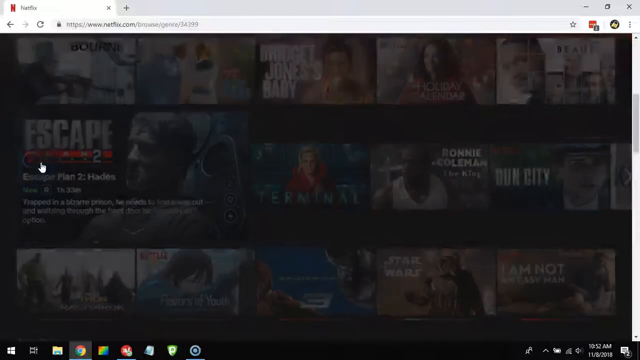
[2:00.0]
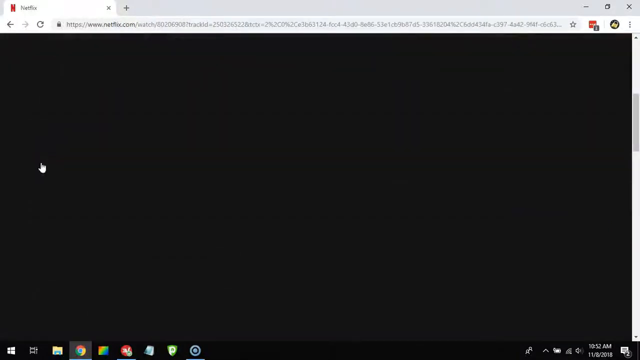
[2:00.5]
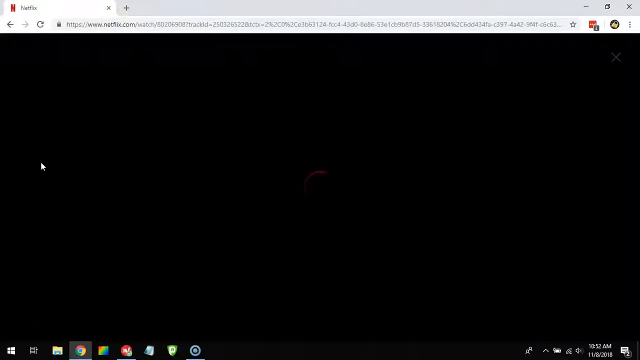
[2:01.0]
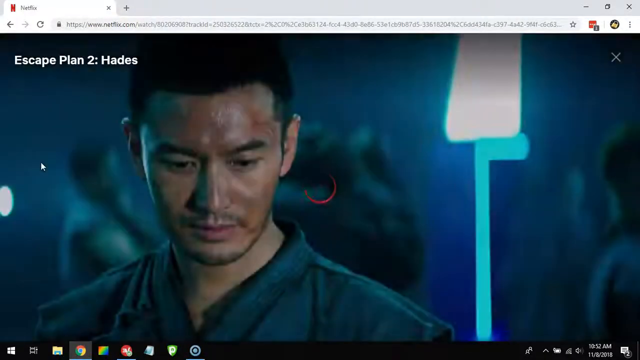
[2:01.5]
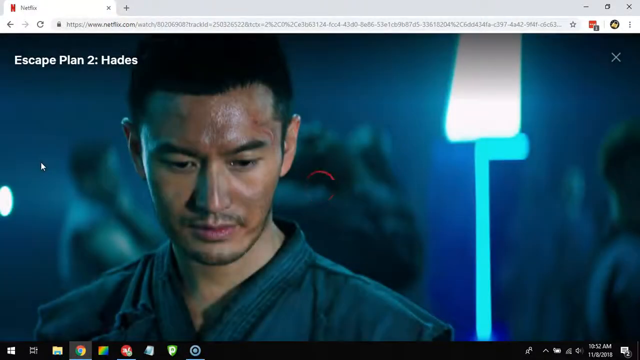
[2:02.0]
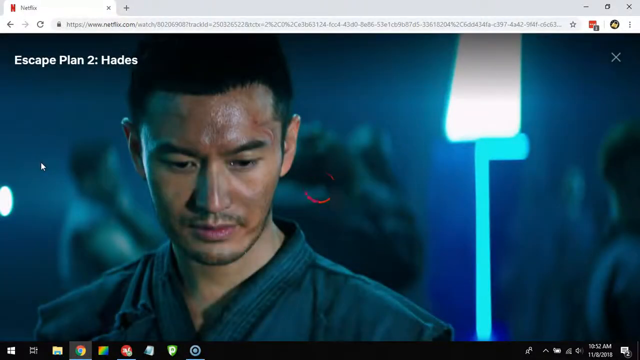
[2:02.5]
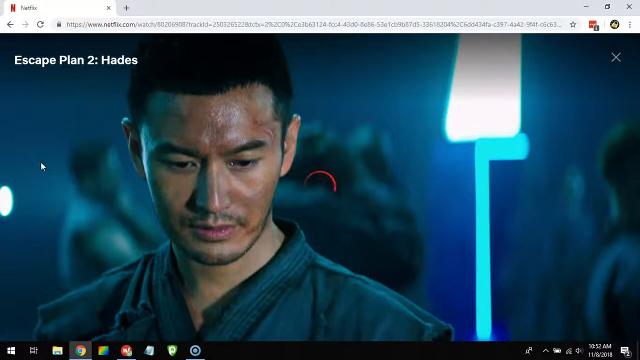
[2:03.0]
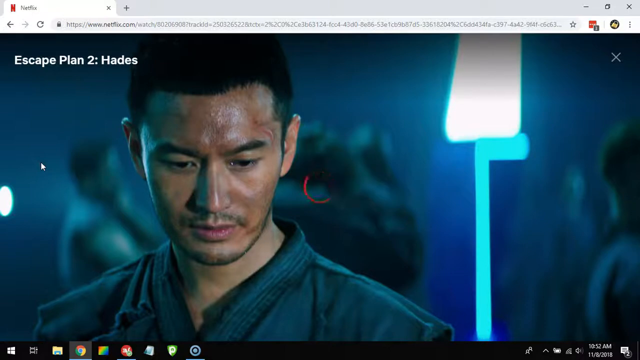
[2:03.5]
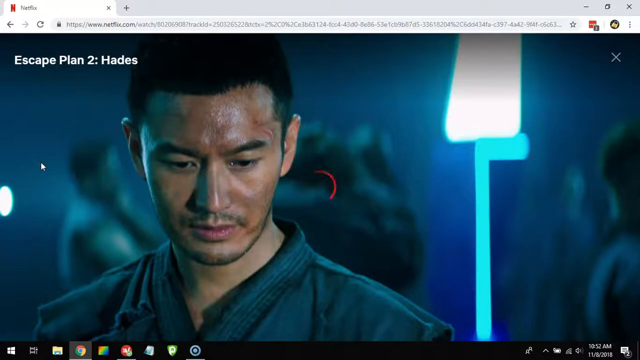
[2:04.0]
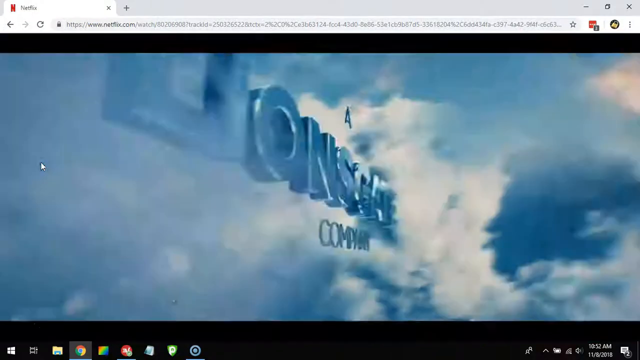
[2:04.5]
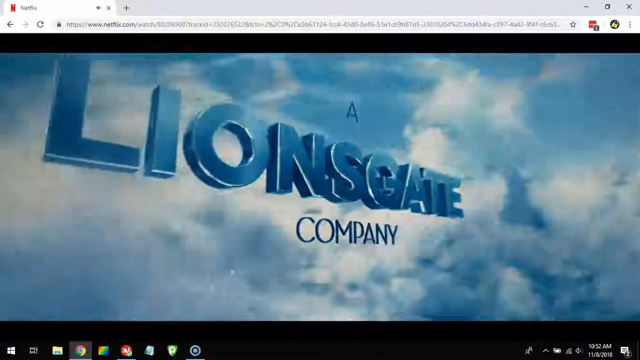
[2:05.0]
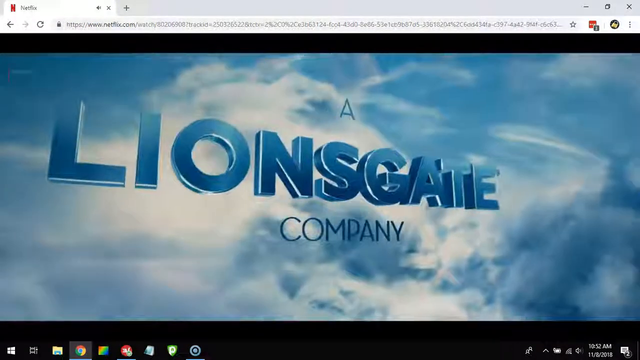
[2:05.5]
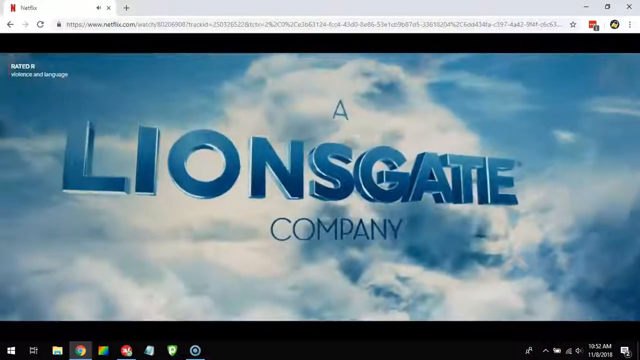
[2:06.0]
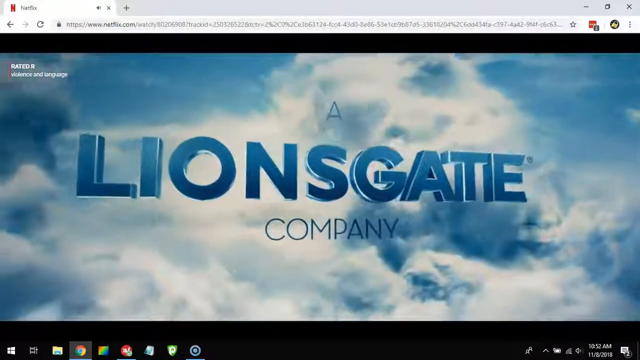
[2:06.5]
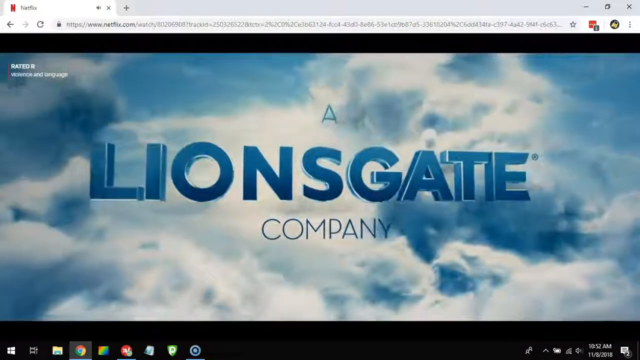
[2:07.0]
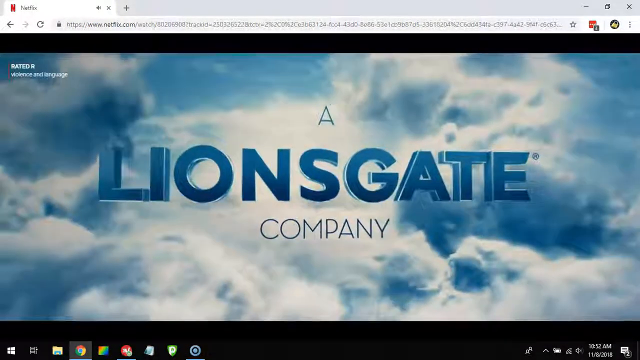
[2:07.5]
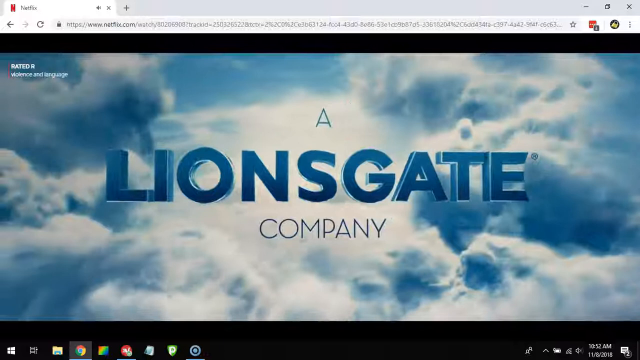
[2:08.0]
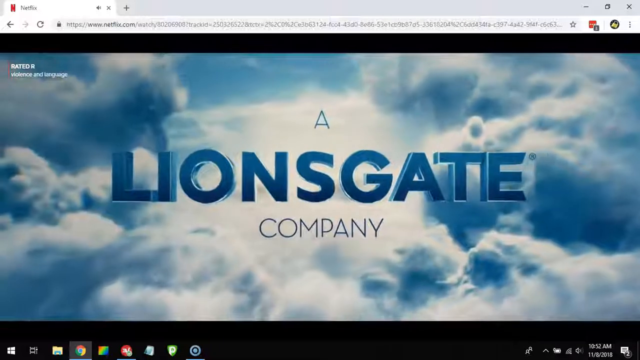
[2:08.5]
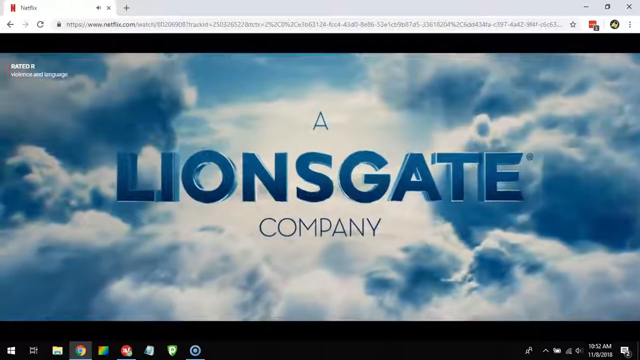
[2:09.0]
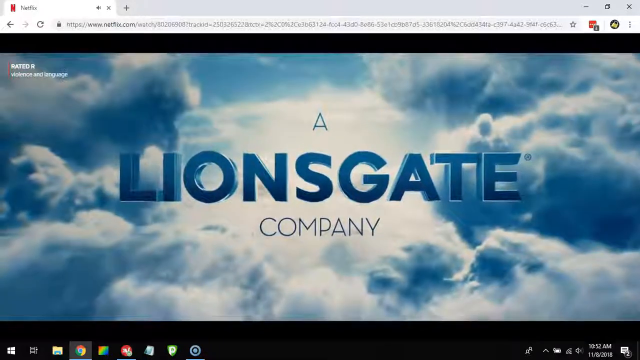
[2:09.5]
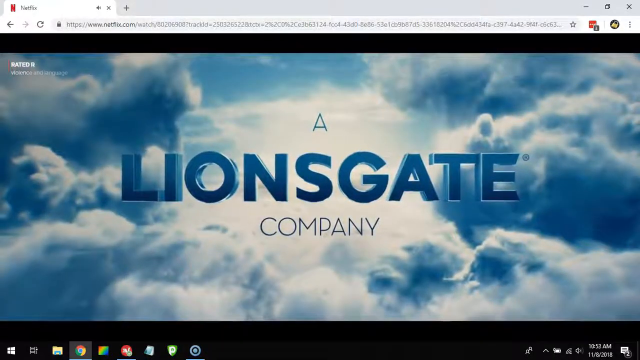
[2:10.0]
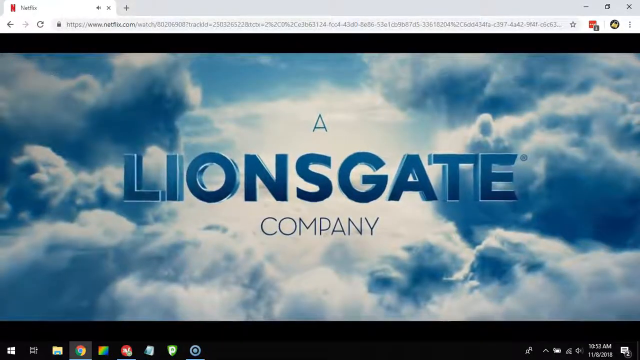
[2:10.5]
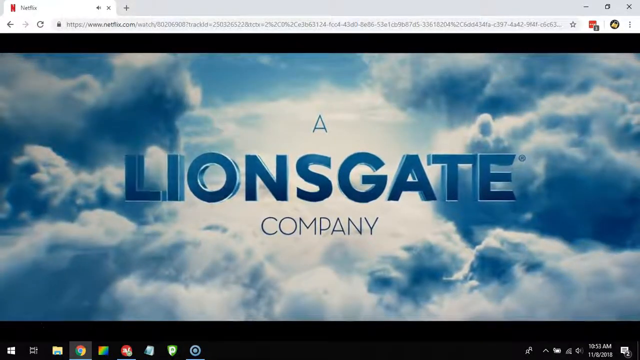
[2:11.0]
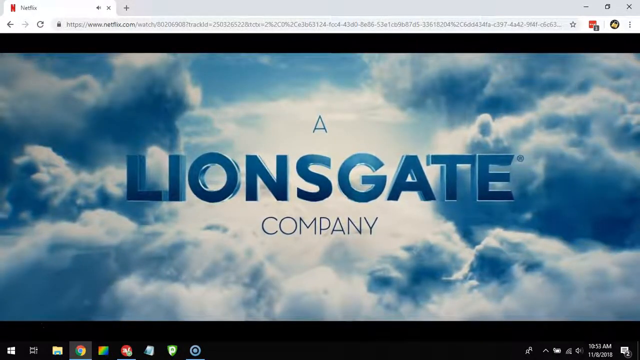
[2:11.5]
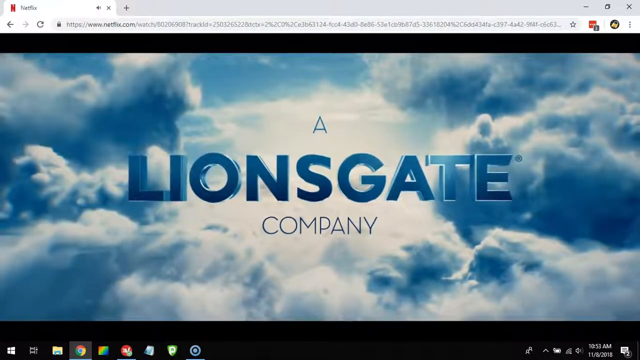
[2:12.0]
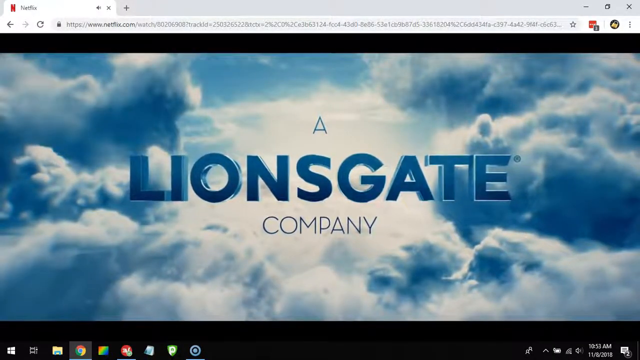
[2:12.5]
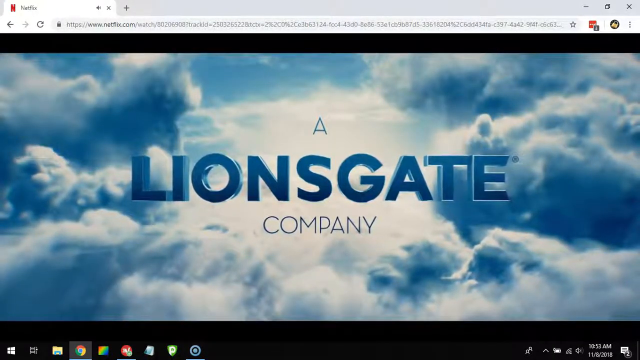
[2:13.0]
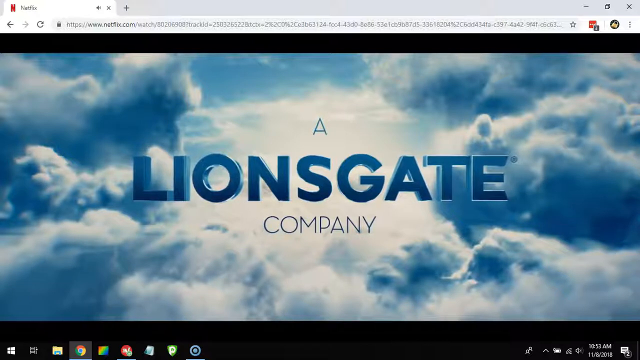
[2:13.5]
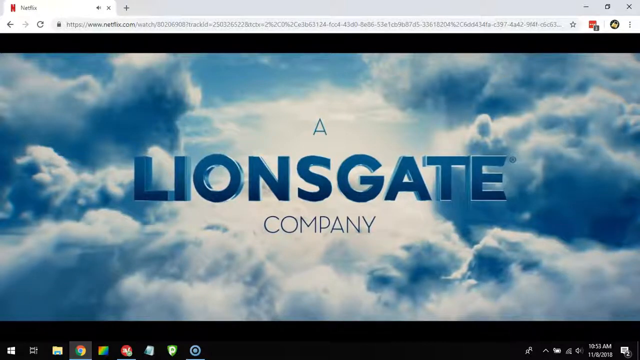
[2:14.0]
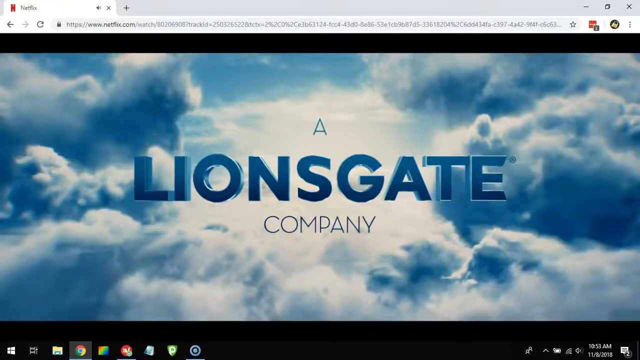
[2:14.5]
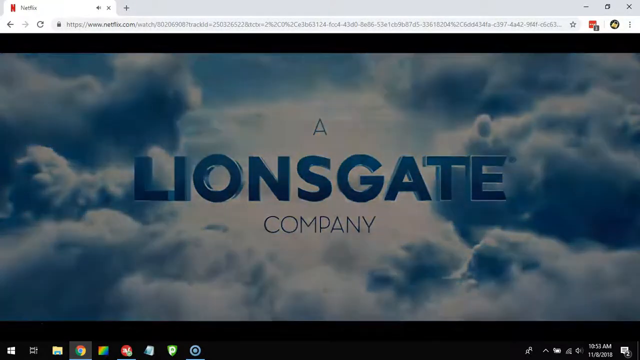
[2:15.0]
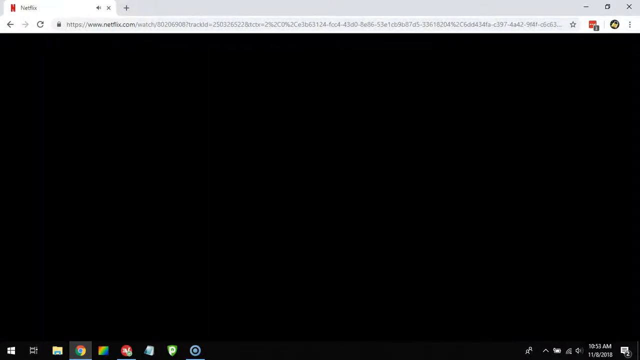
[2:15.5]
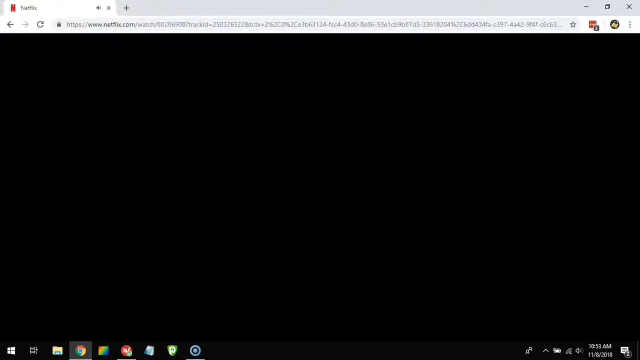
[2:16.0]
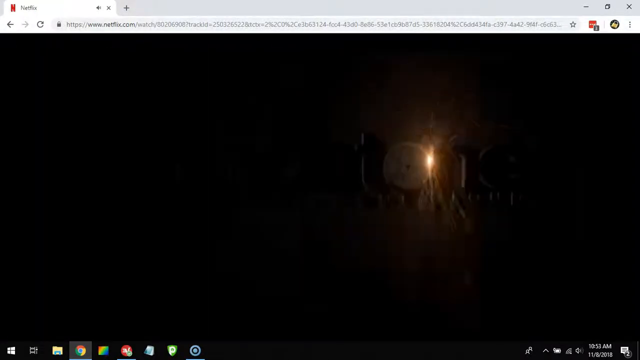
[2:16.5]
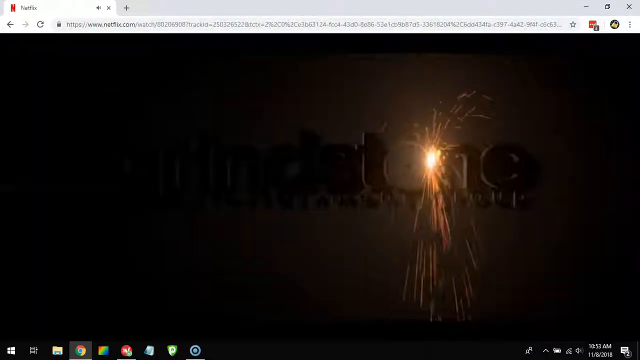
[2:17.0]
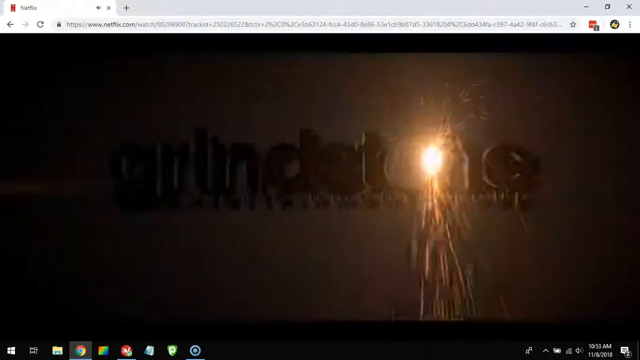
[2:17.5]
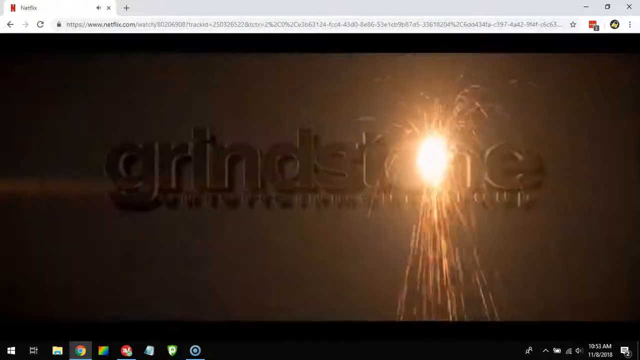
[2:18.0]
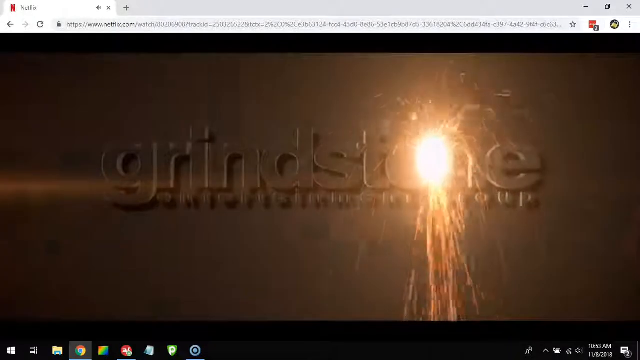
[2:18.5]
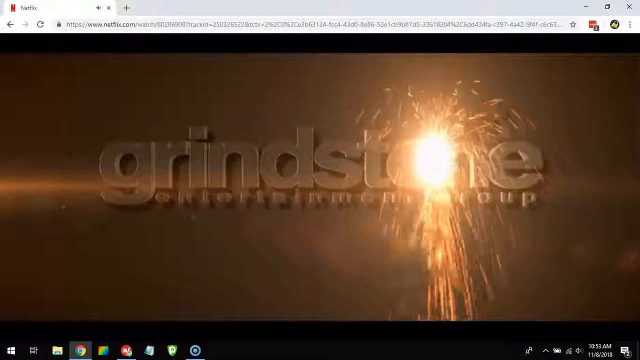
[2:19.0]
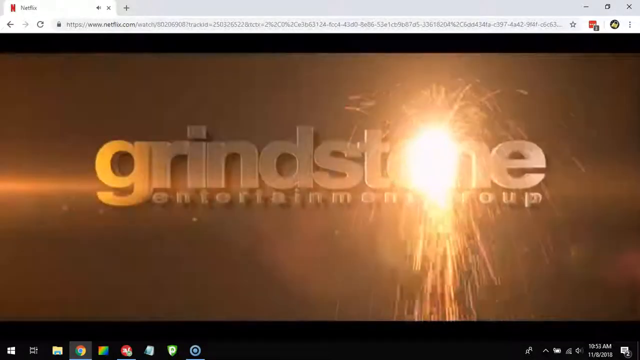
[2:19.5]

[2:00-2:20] Escape Plan 2 is selected. The loading screen is a still shot of another actor from the movie, with "Escape plan 2: Hades" in the top left corner. The Lionsgate logo comes up against a background of clouds, with a shimmer effect on the Lionsgate text, and "rated R violence and language" appears in the top left. It fades to black, and the Grindstone logo fades in from black, with sparks flying between the O and the N. The O is like a grinding wheel.